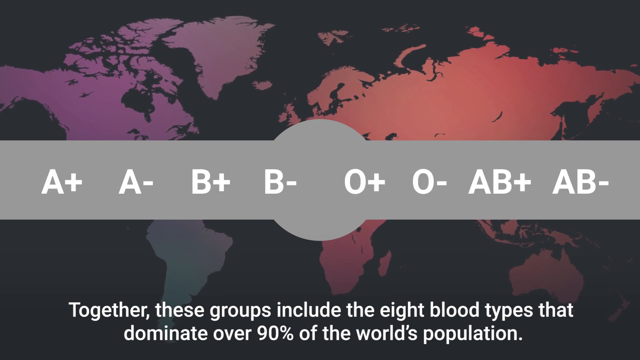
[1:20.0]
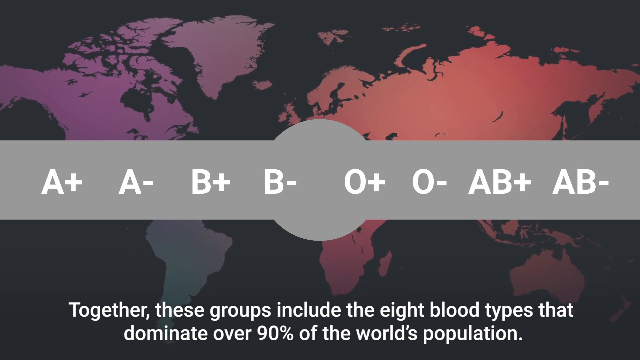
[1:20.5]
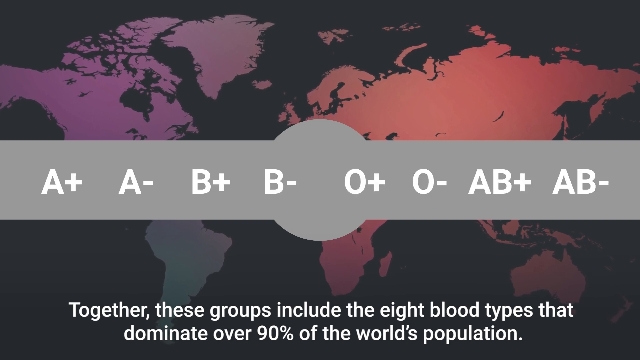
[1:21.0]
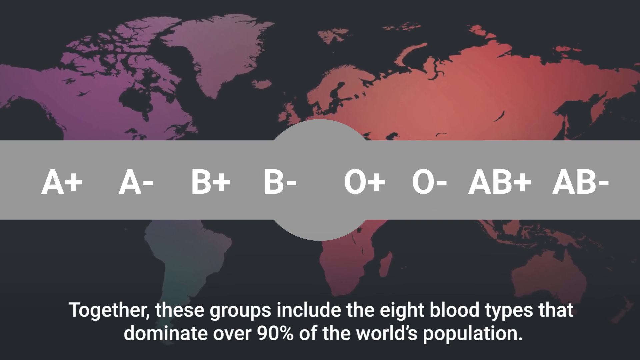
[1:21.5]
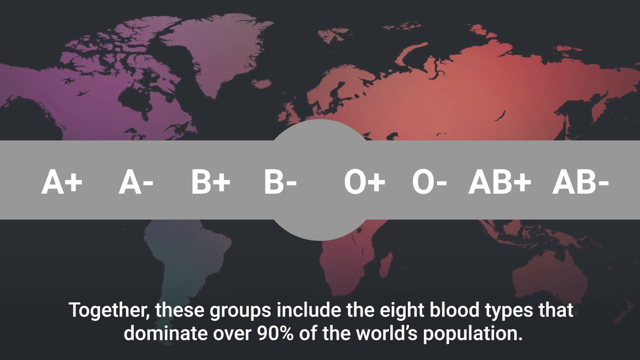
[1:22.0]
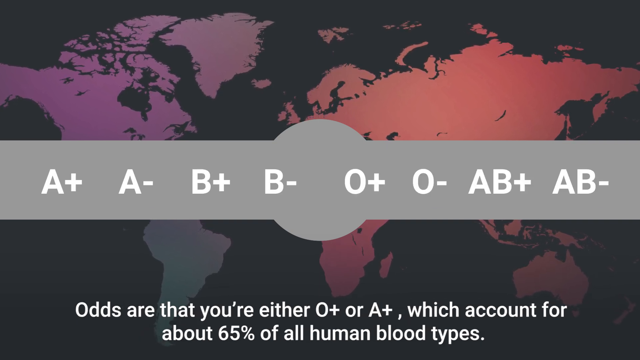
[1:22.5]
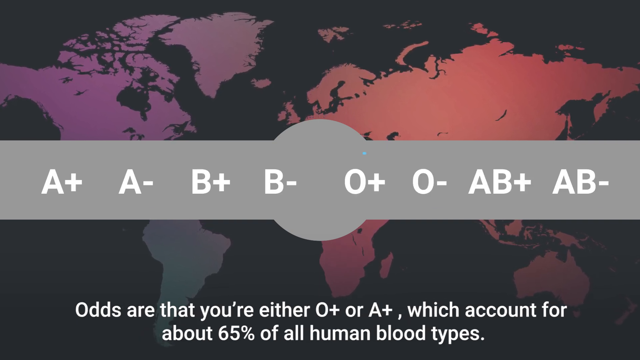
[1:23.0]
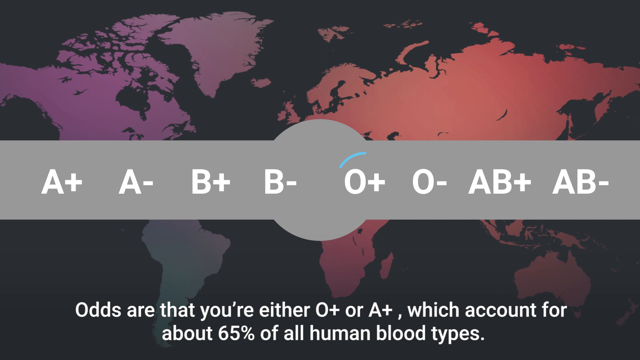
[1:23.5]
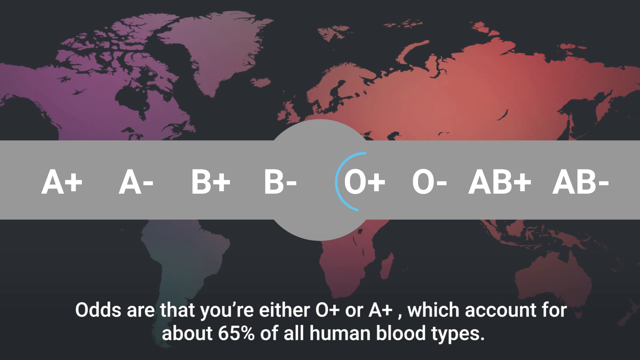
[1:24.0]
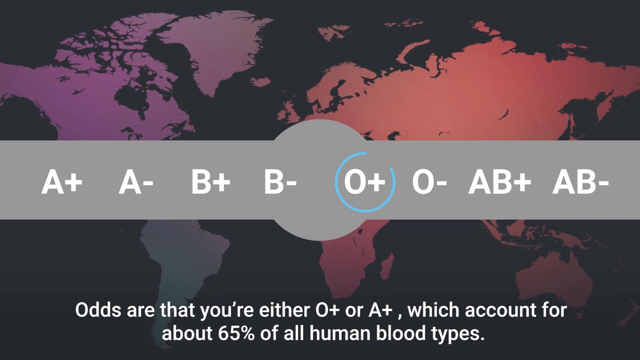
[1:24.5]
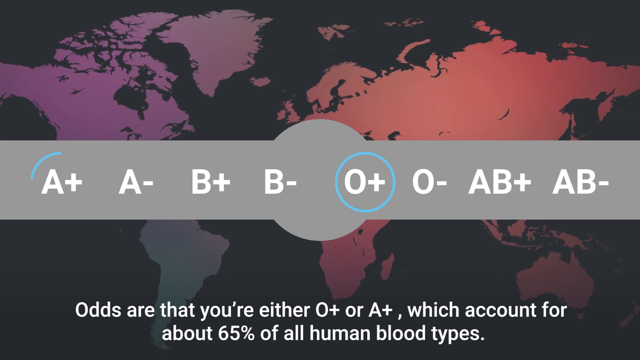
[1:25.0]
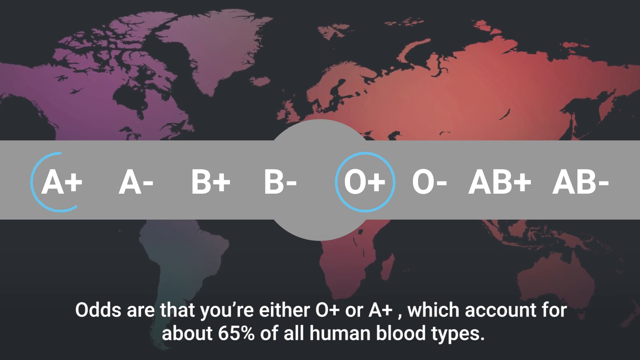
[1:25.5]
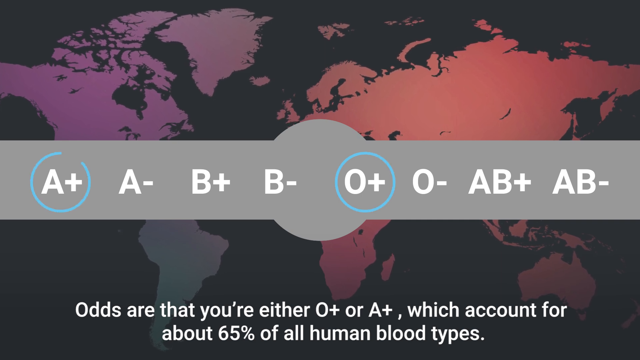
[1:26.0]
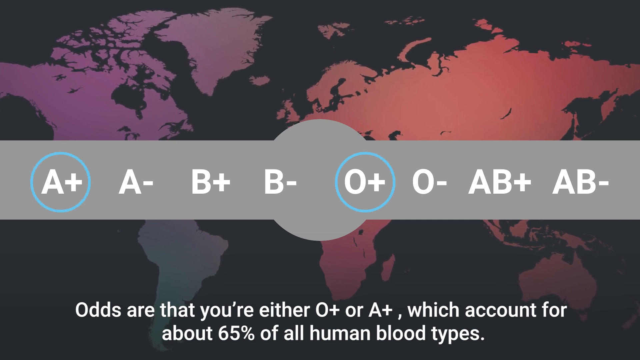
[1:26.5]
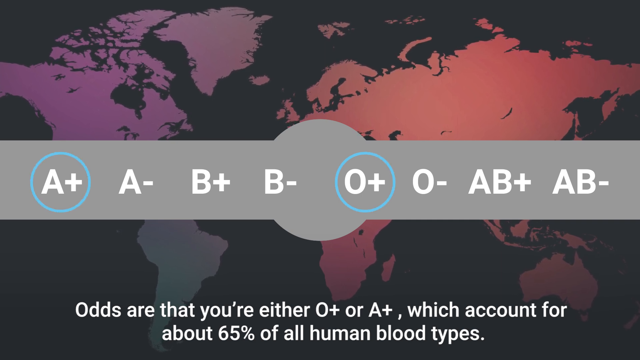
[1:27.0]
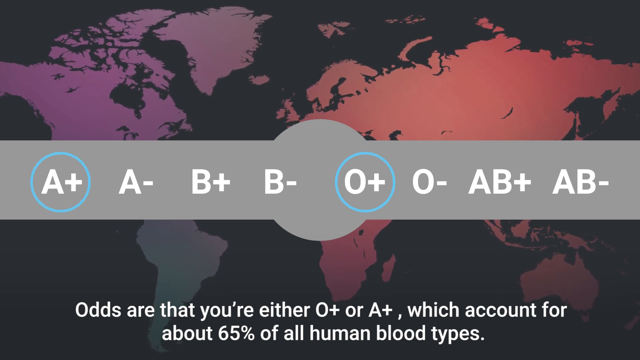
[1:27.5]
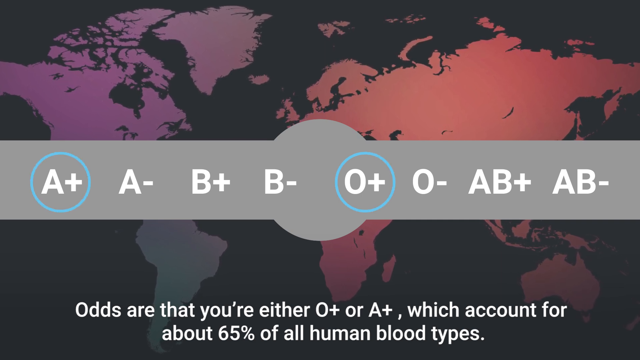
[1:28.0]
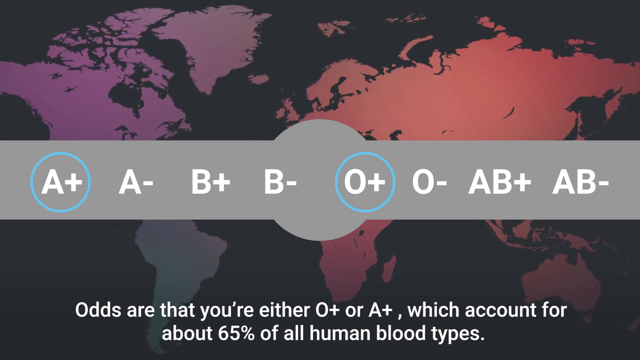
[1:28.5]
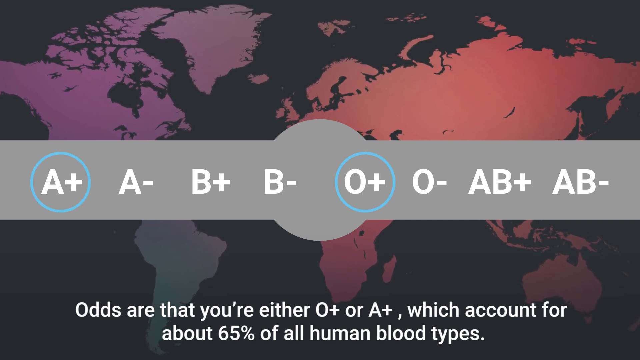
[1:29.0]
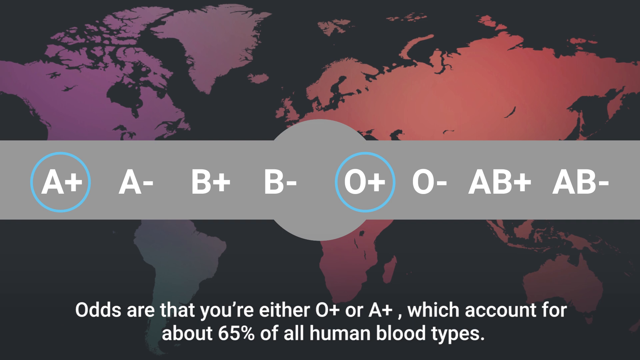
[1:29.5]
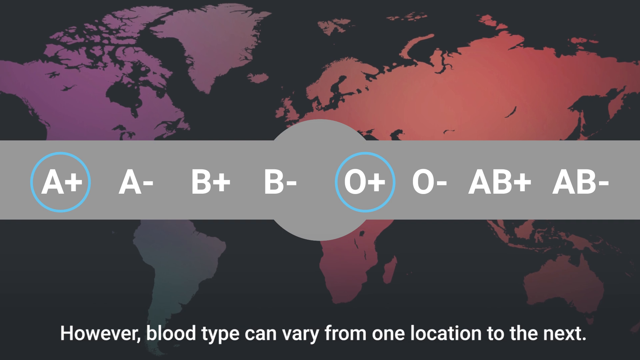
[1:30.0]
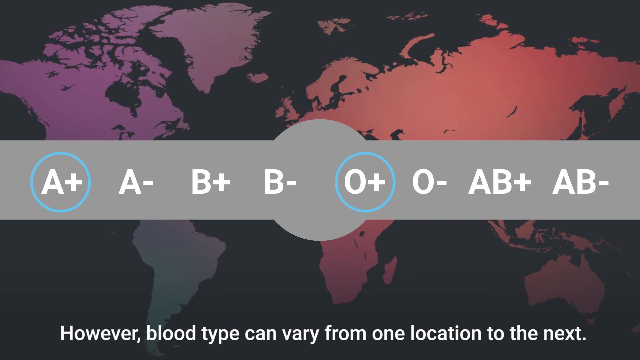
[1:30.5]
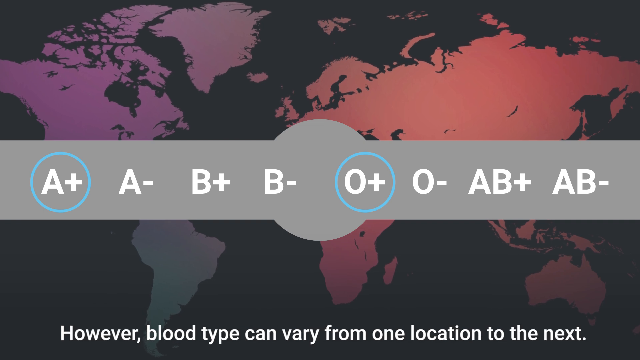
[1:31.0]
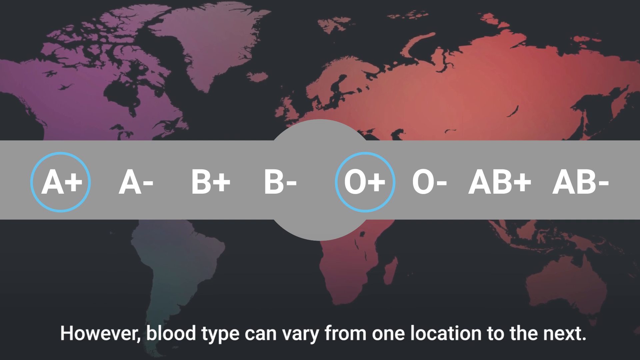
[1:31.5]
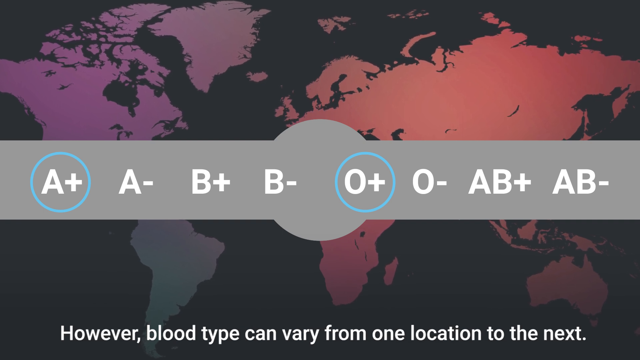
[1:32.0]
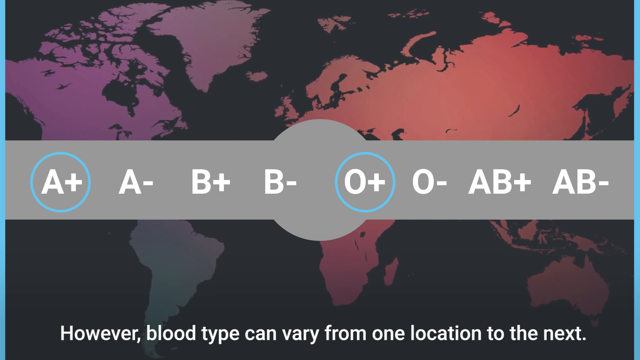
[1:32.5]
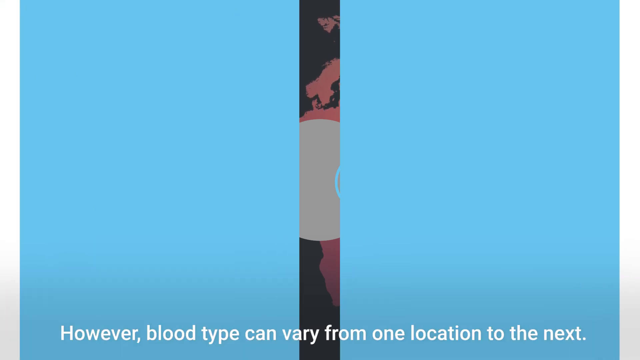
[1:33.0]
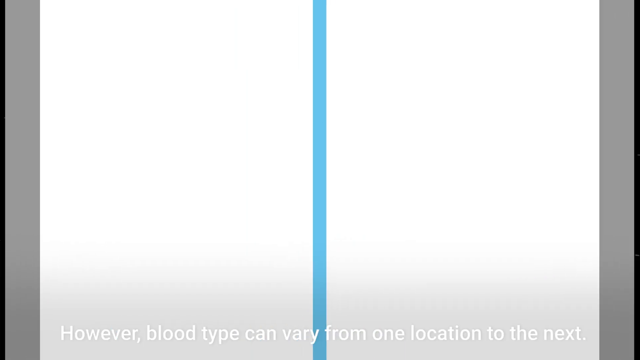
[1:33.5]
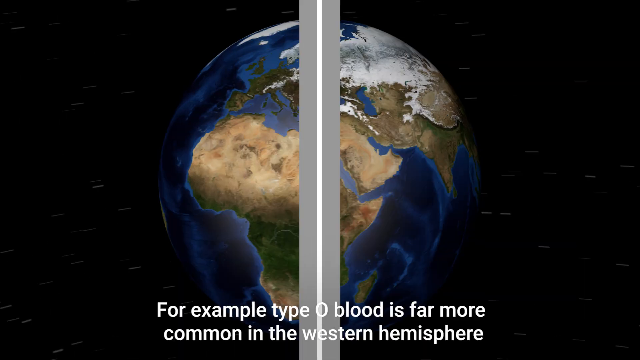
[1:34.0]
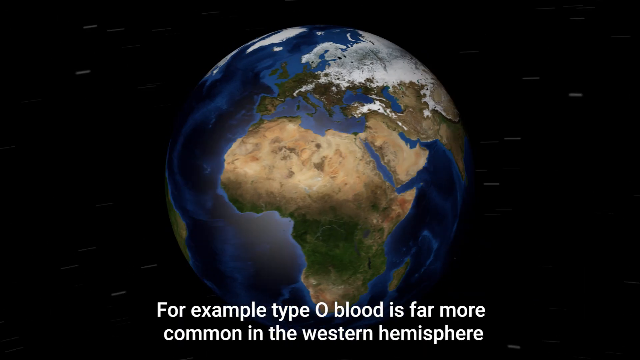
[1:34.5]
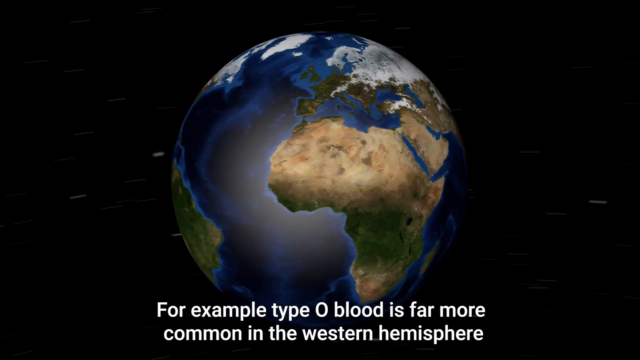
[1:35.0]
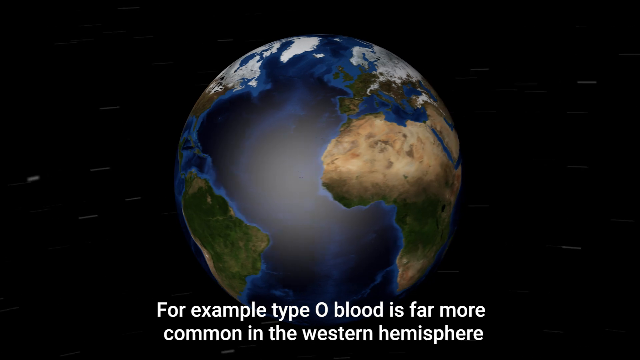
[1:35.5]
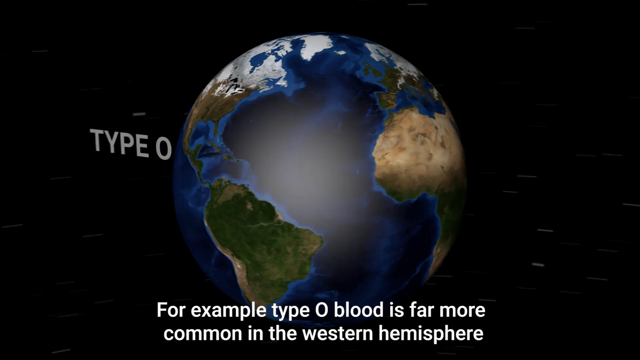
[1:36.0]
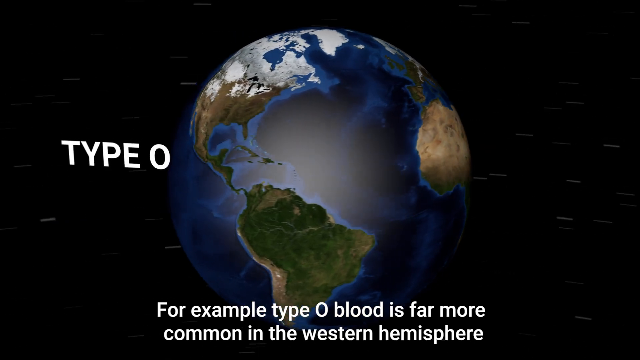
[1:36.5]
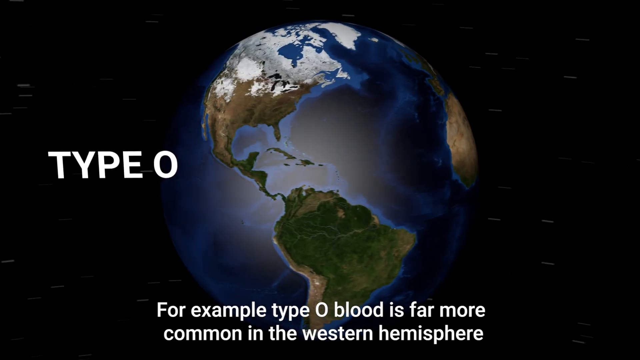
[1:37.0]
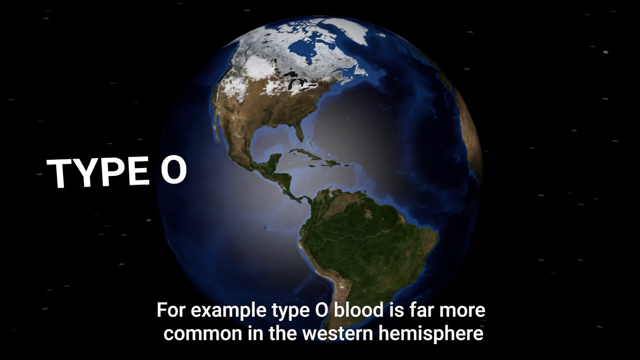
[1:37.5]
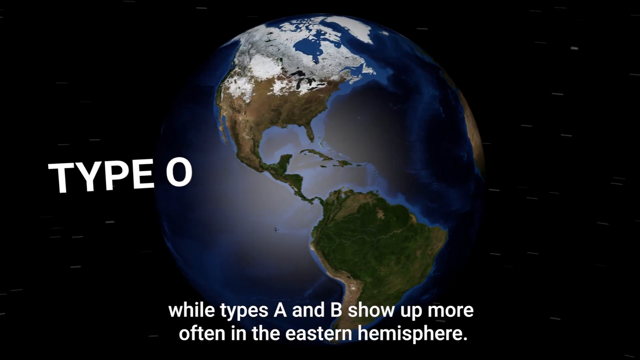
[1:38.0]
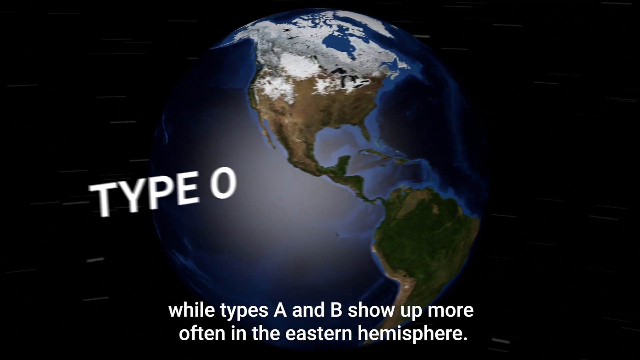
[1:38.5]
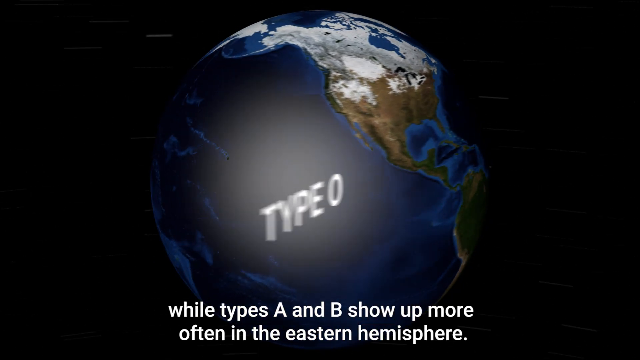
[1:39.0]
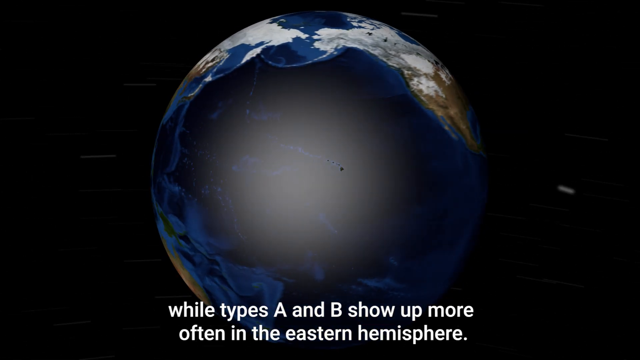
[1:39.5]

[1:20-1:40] All the blood types are labeled from left to right, apparently in terms of how common they are and what group they belong to: A+, A-, B+, B-, O+, O-, AB+, and AB-. Subtitles at the bottom say "together, these groups include the eight blood types that dominate over 90% of the world's population. Odds are that you are either O+, or A+, which account for about 65% of all human blood types." The video then moves to a 3D animation of the planet Earth, with text at the bottom reading "for example, type O blood is far more common in the Western Hemisphere, whereas type A and B show up more," and the text kind of cuts off there.